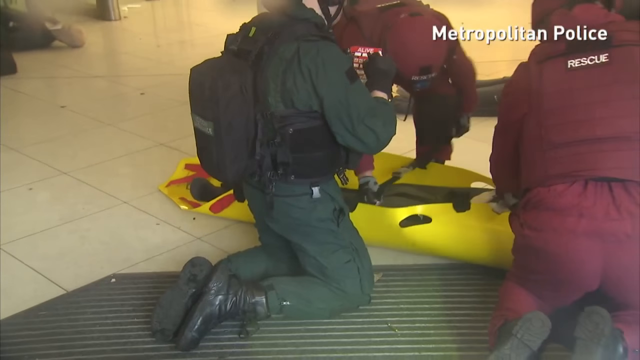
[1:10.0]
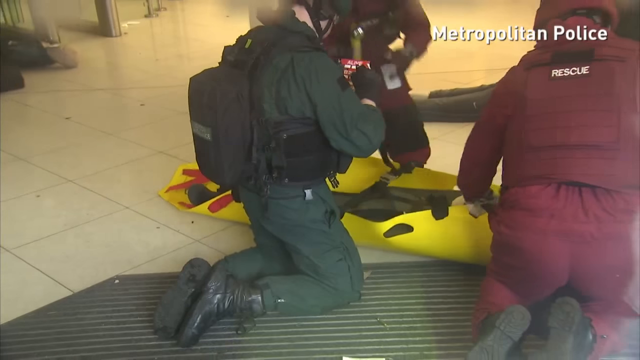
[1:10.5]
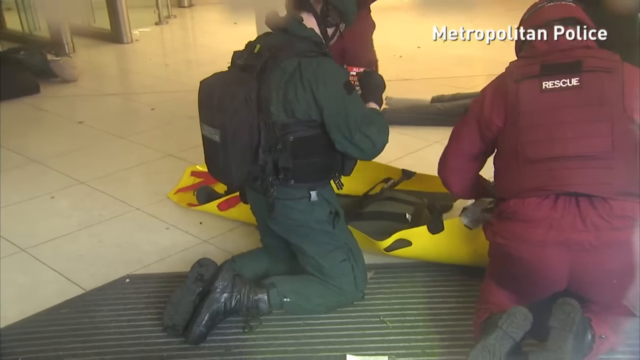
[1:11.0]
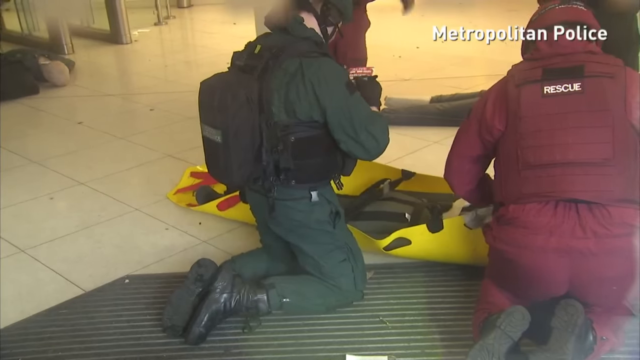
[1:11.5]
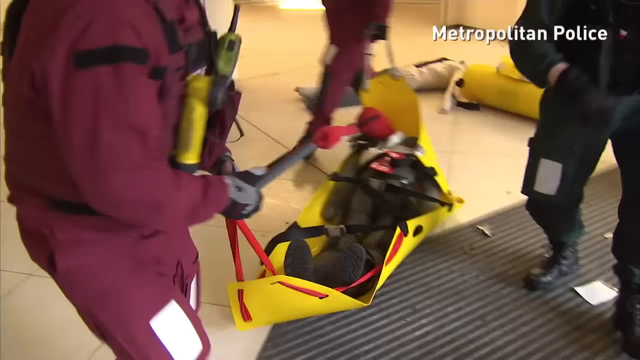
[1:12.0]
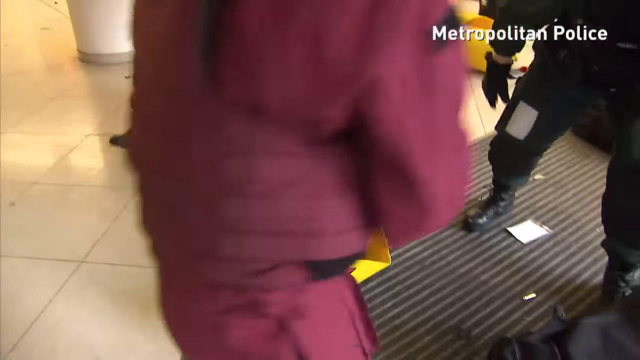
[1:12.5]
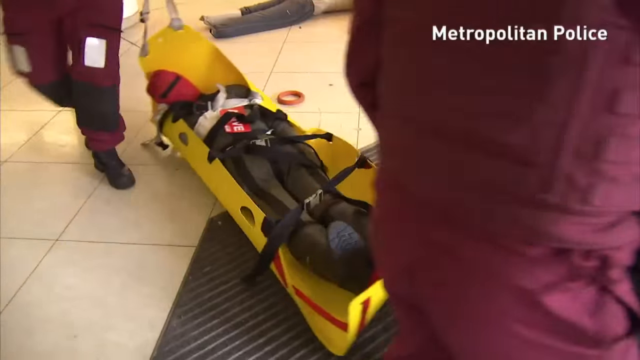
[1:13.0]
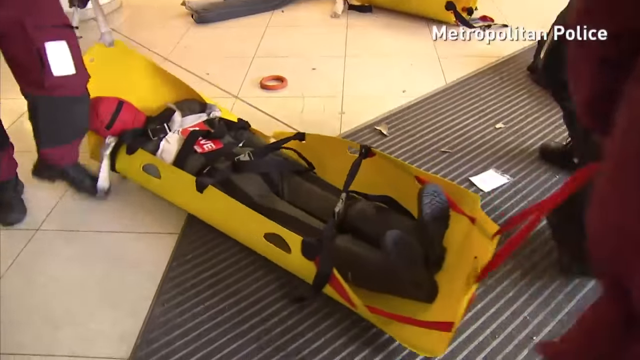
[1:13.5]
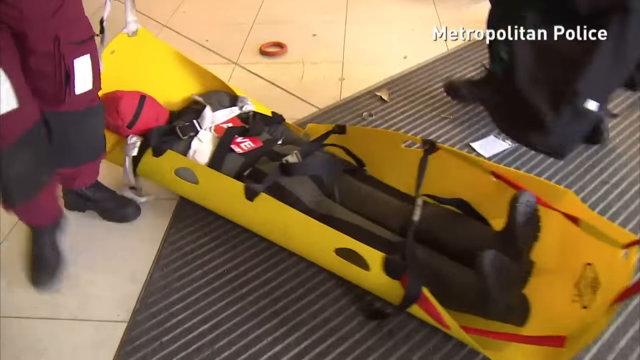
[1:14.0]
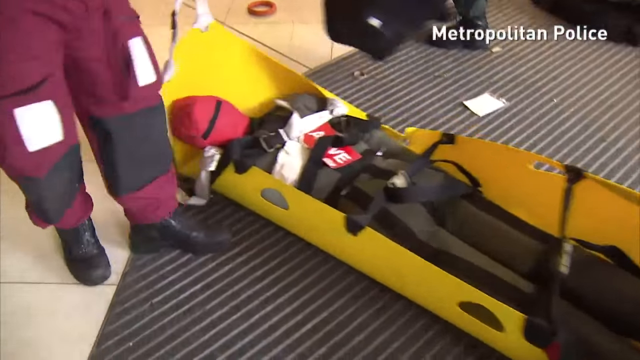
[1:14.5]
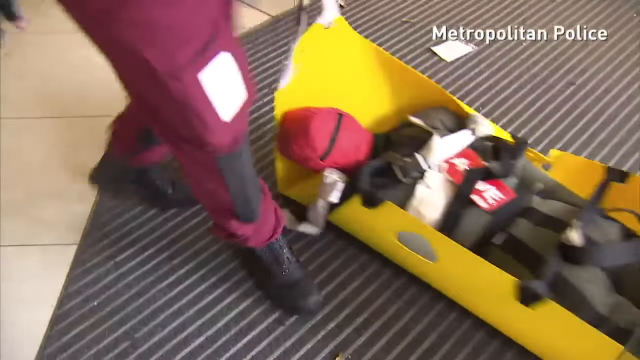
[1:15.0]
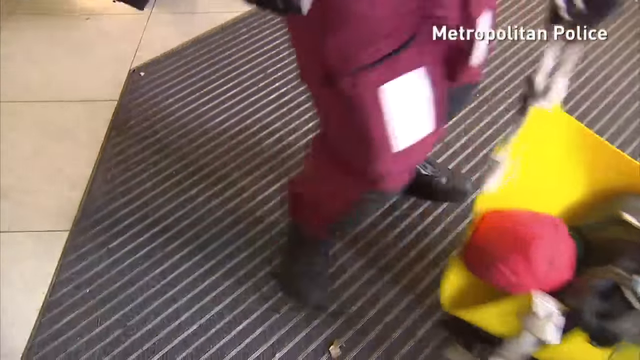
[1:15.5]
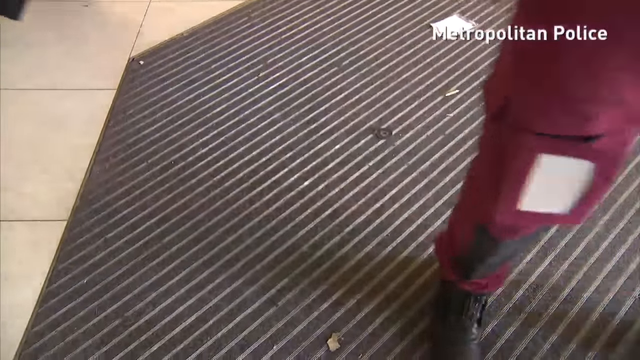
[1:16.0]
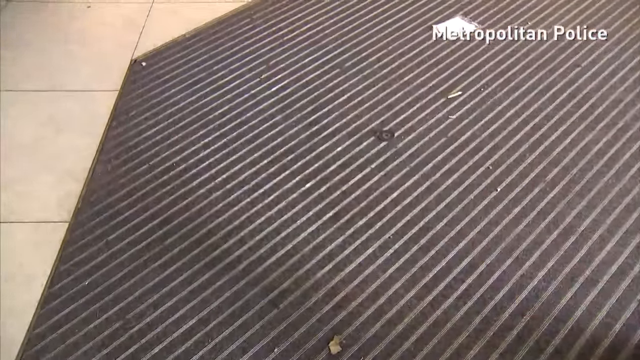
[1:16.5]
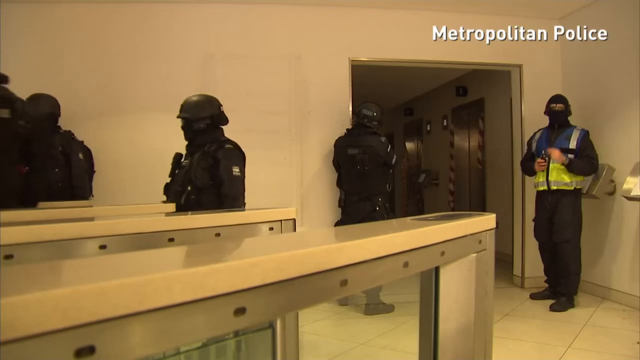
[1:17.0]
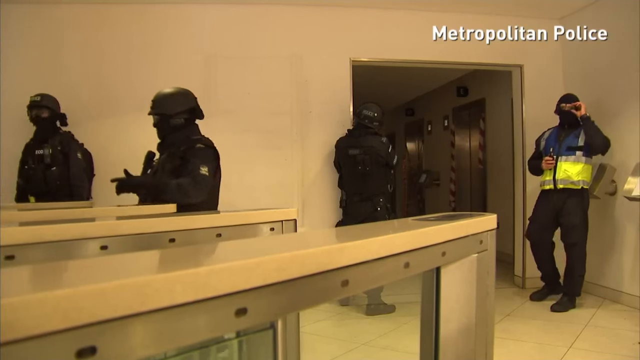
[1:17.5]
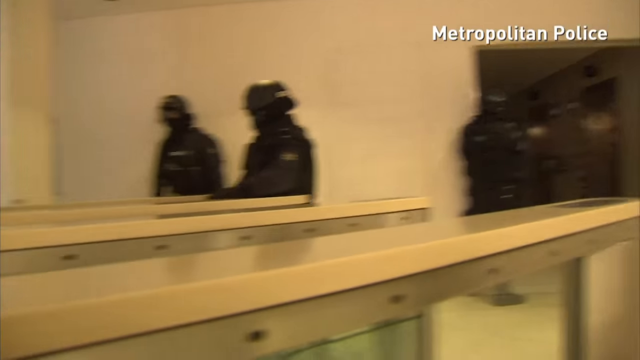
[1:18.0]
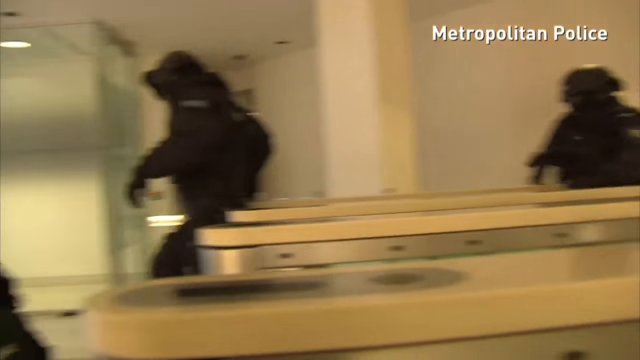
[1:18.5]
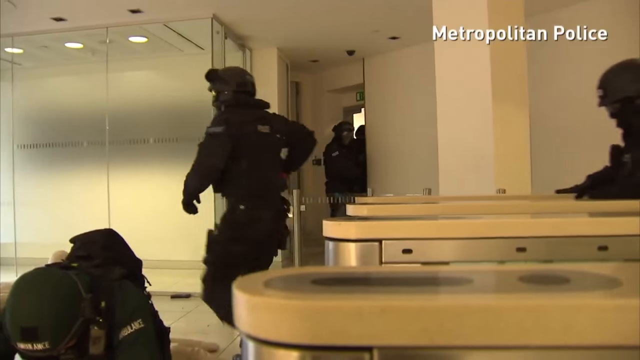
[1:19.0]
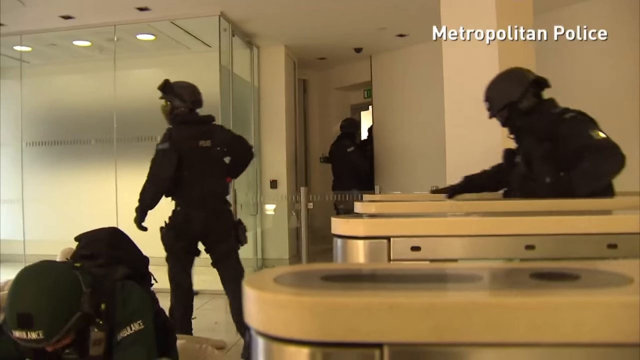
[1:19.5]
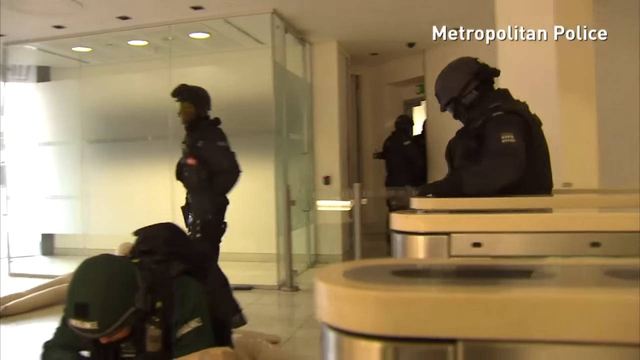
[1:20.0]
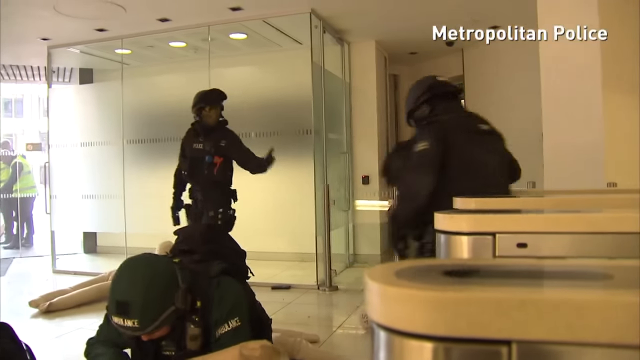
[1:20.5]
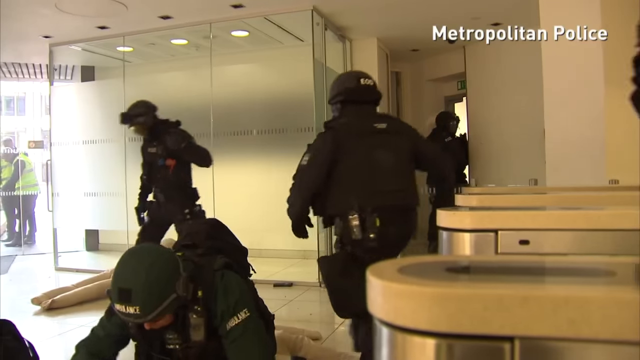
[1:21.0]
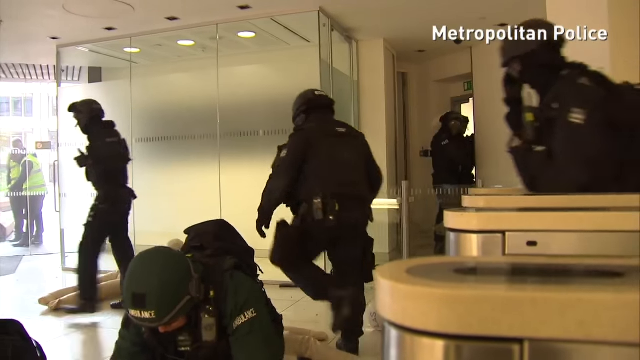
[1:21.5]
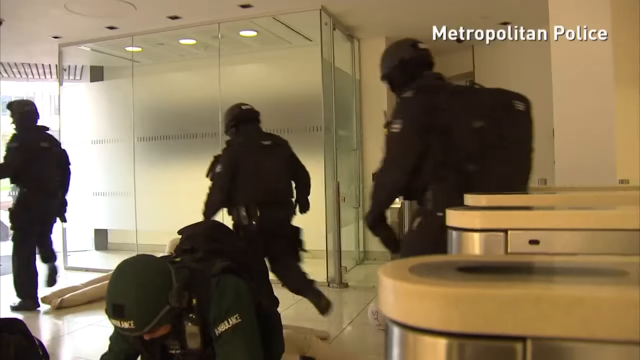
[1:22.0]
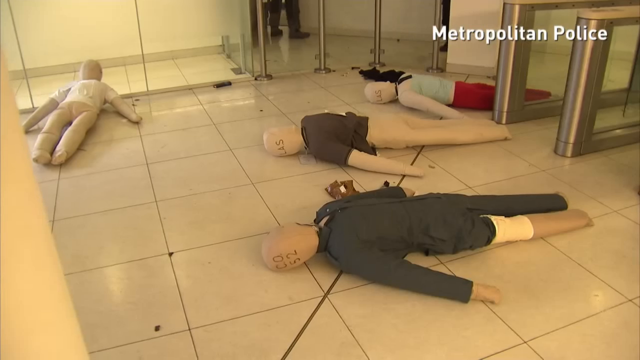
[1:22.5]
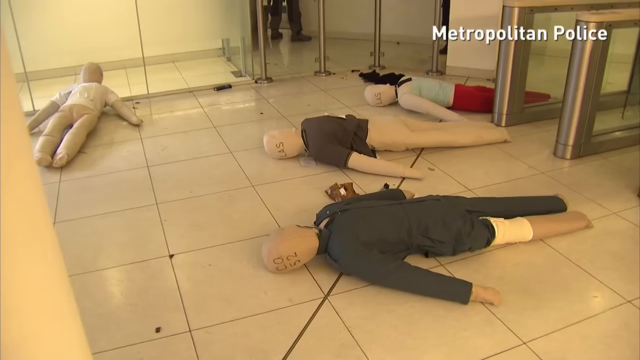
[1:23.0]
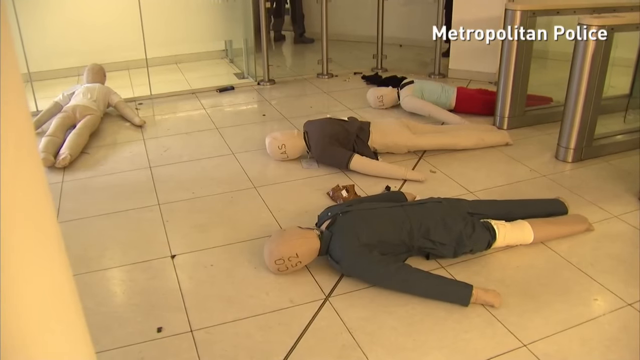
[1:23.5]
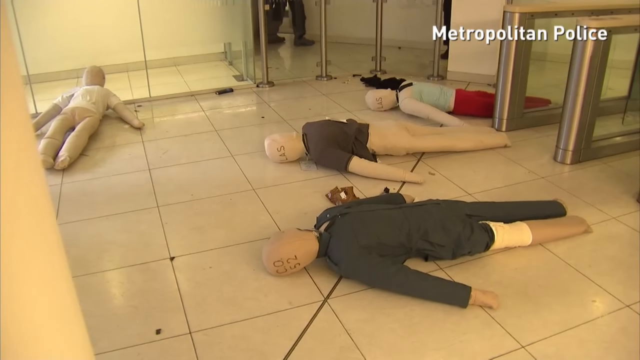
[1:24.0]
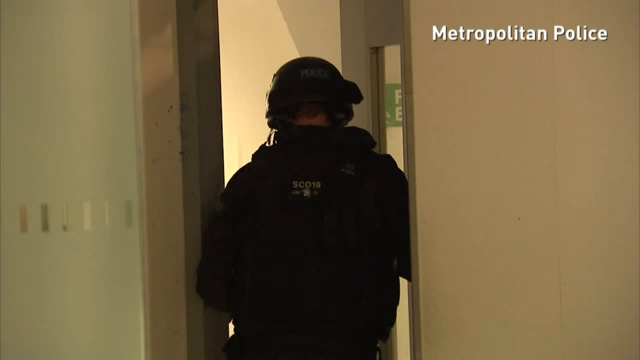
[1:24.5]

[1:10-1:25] A policeman moves farther into the building, possibly a bank. The focus is on the floor with the dead bodies. At first they are still carrying the attackers' bodies; farther into the building there are bodies of adults and children, men and women, and the police view them, seemingly about to carry these bodies off as well.